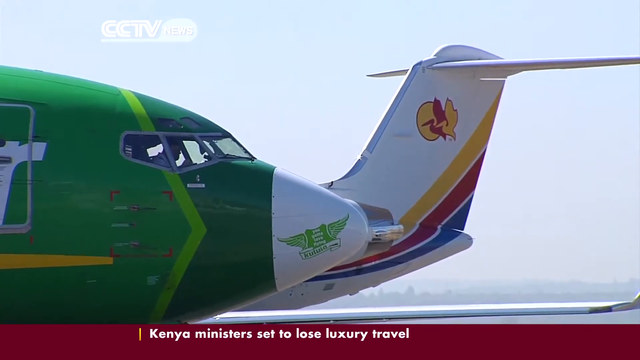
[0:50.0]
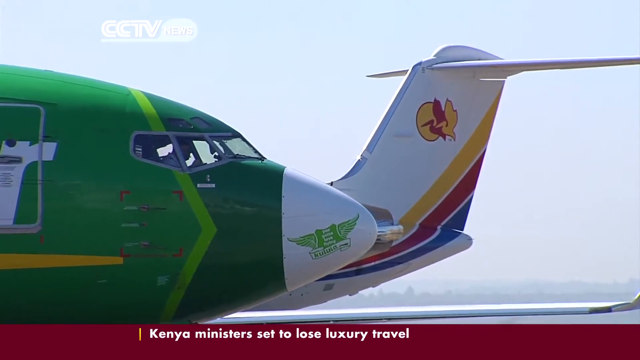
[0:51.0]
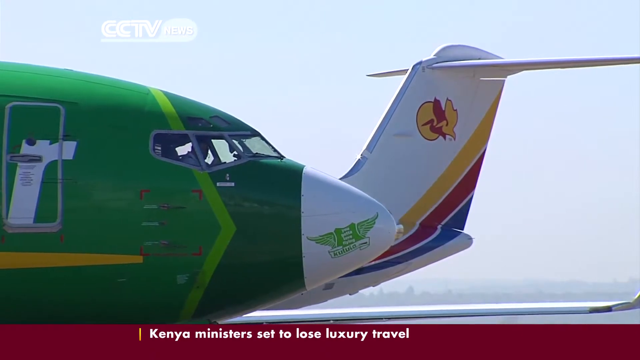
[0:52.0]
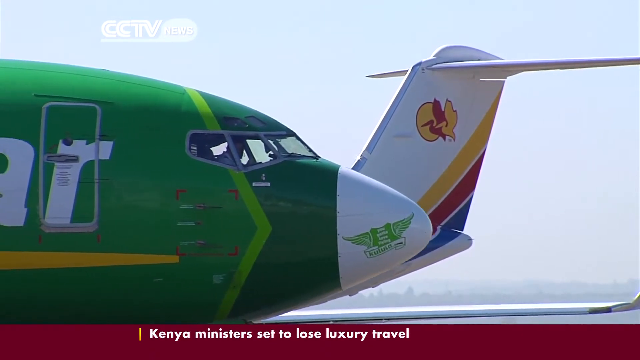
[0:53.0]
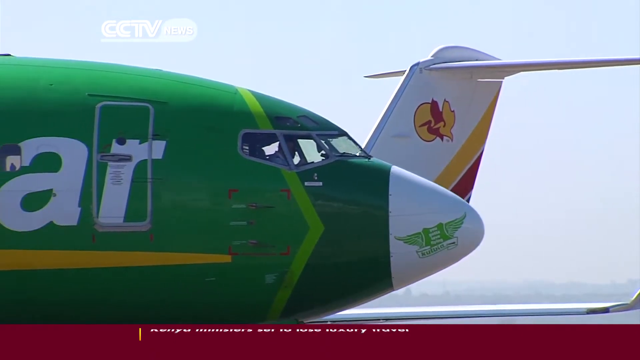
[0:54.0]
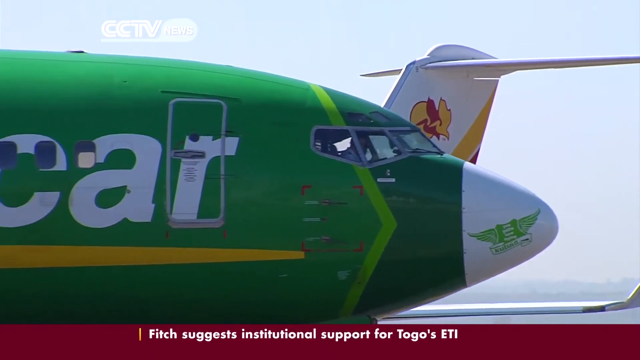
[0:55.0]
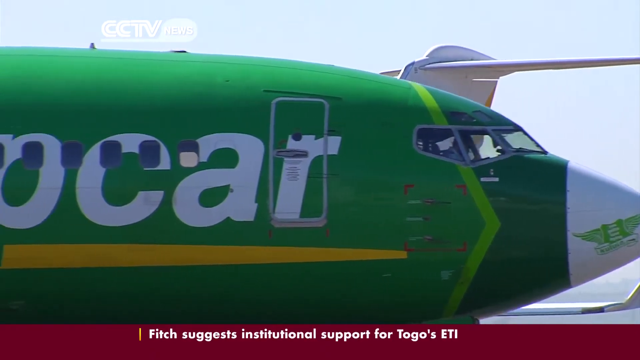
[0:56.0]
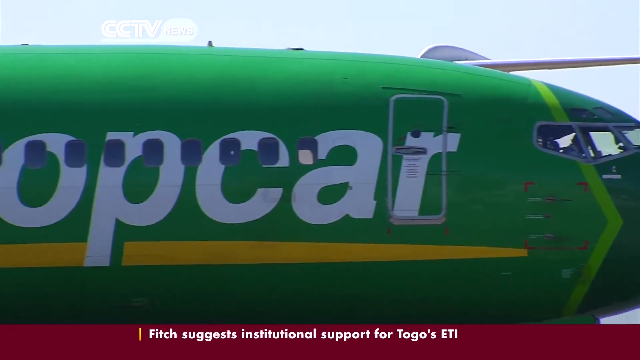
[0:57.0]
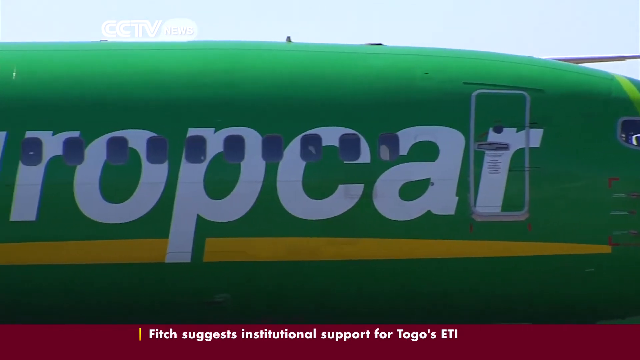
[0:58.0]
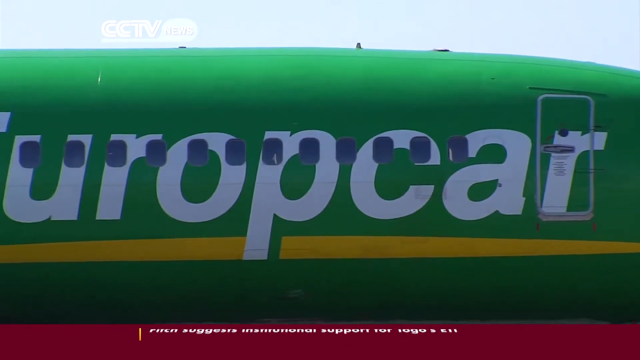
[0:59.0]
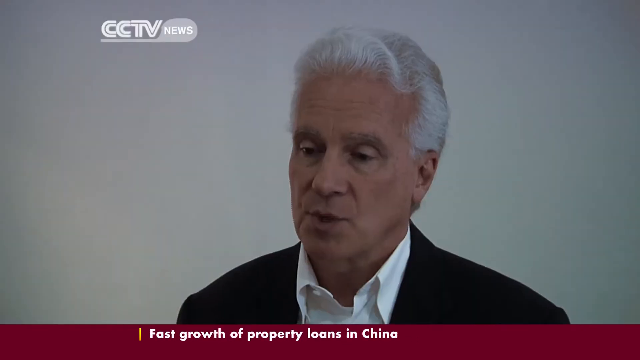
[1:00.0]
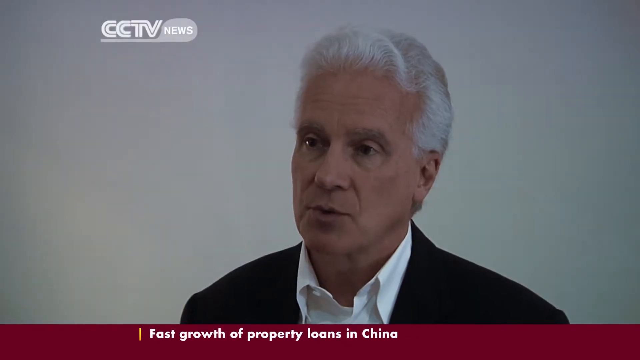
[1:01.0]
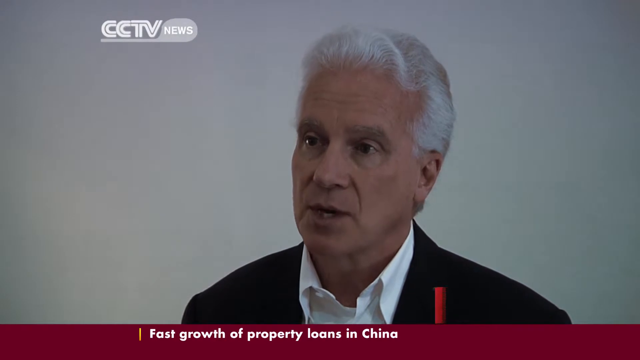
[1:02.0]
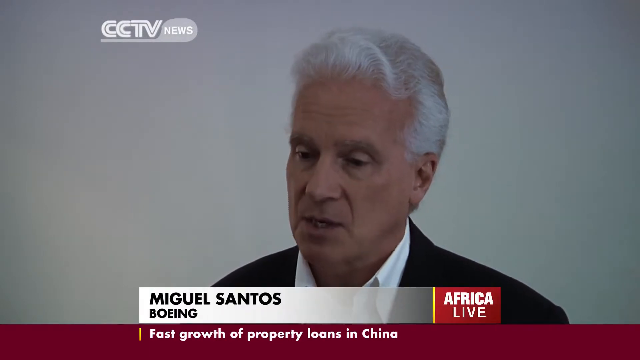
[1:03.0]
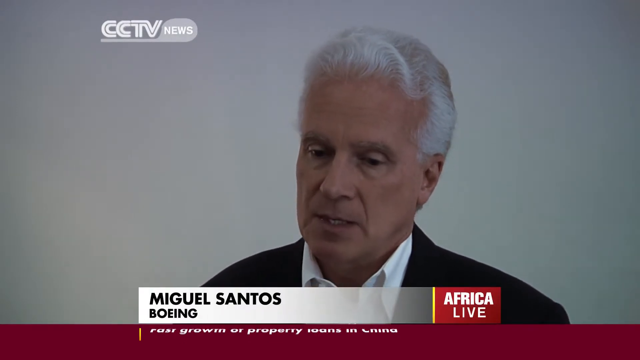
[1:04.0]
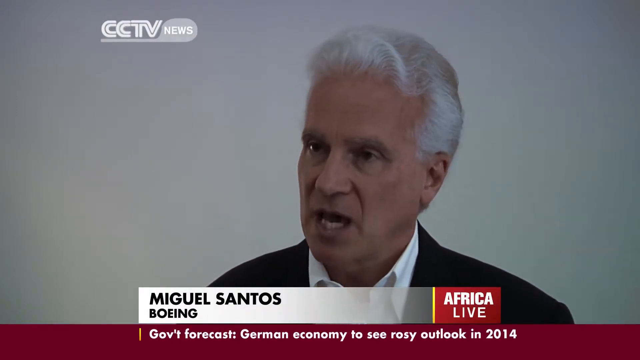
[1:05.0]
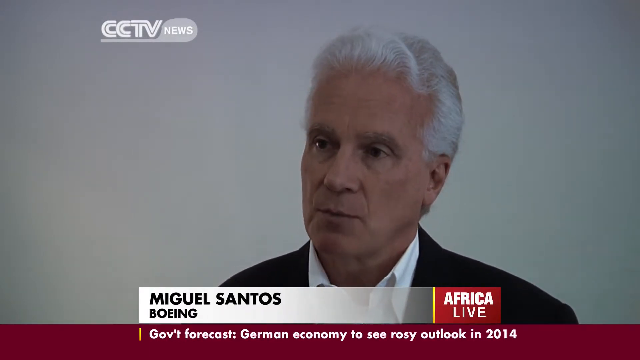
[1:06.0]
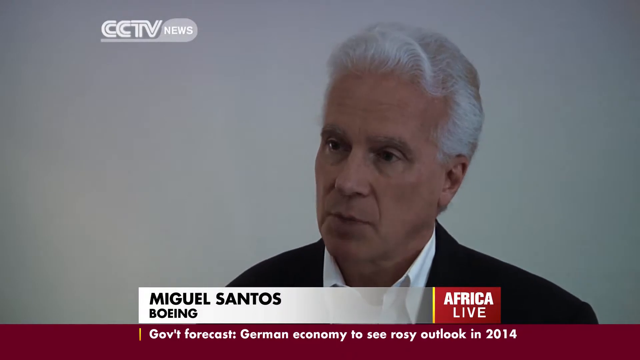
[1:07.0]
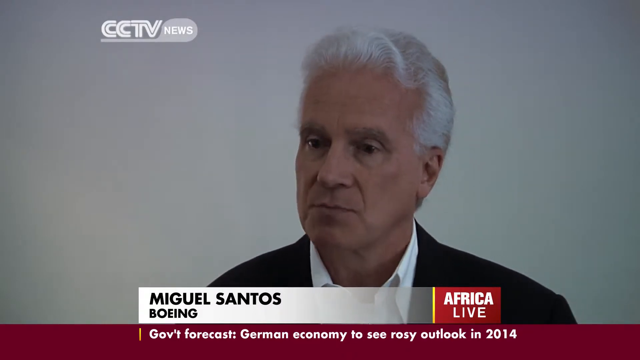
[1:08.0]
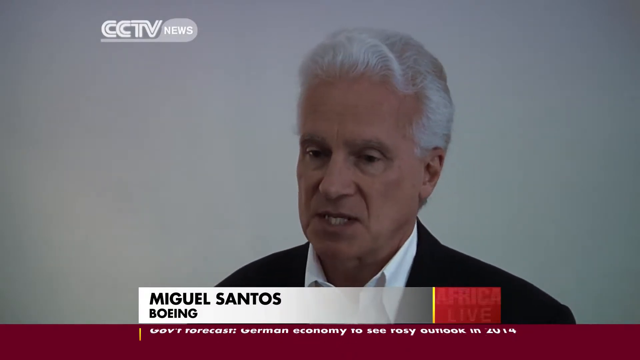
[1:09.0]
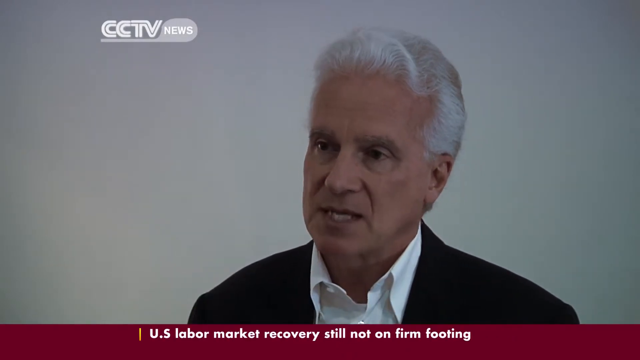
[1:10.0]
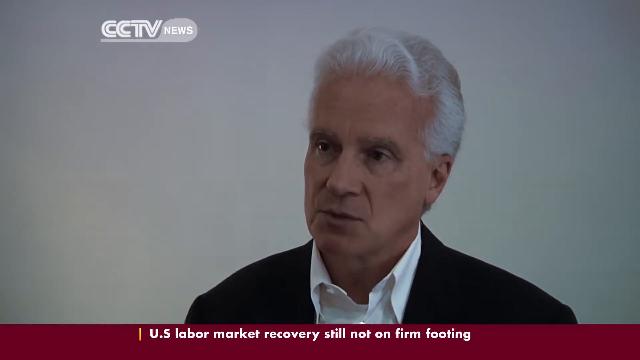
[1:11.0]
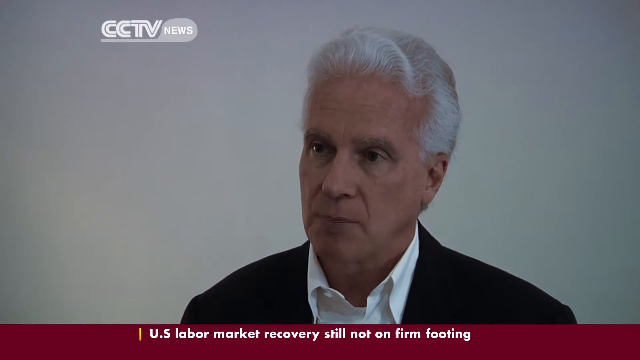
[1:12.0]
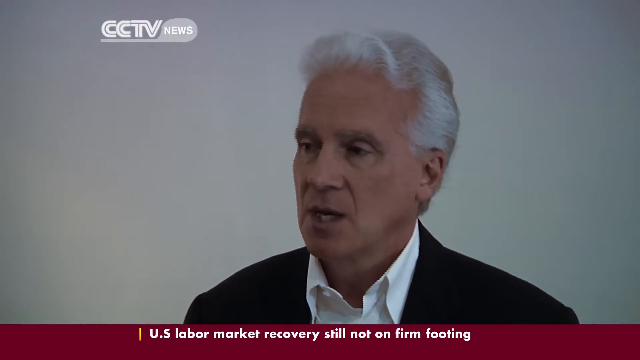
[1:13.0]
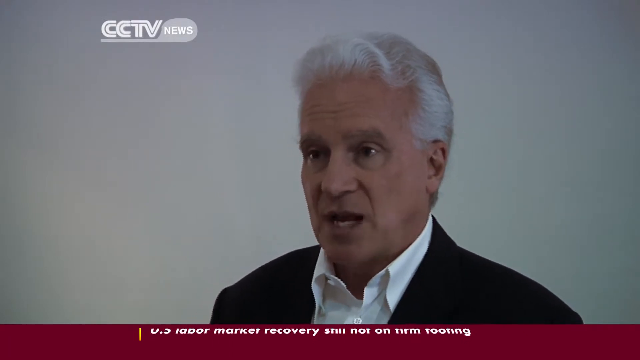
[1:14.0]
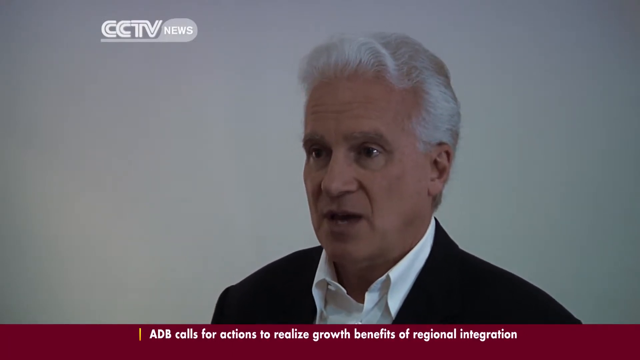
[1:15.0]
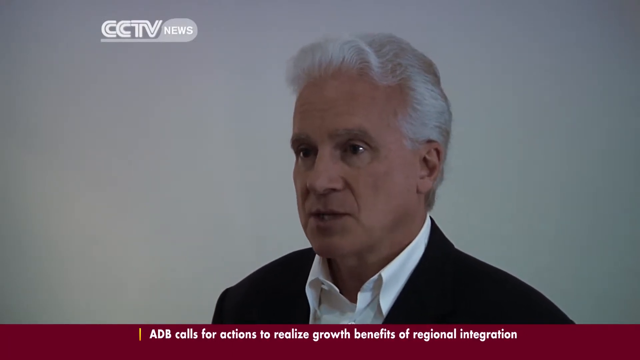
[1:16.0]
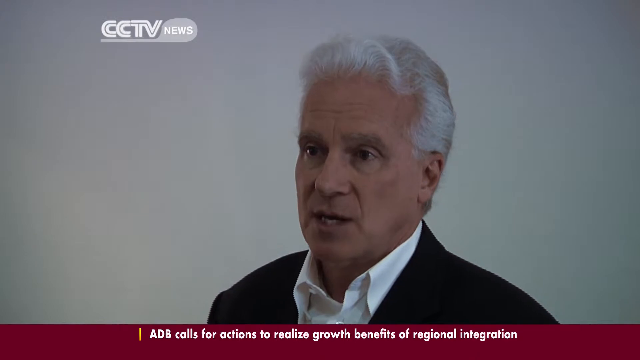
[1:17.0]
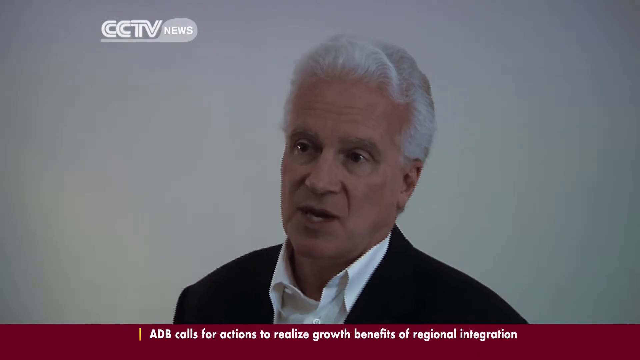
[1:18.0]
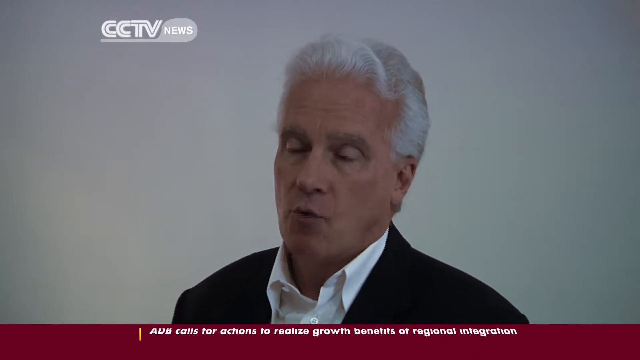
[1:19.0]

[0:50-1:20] The Europcar is shown alongside the tail of another airplane with an unfamiliar design: a pelican on a yellow circle outlined in red. The pelican's body is red, one wing is red, and the other wing is yellow bordered with red. Lower down on the tail is a stripe of yellow, red and blue. The Europcar pulls out. Suddenly the video cuts to Miguel Santos from Boeing, who is talking and does not look happy. He has gray hair with a big wave in the front and wears a suit coat with a white button-down shirt, its collar unbuttoned a little.